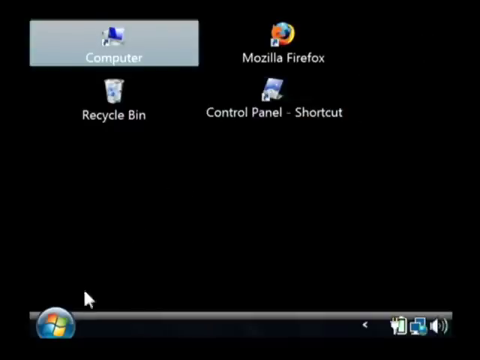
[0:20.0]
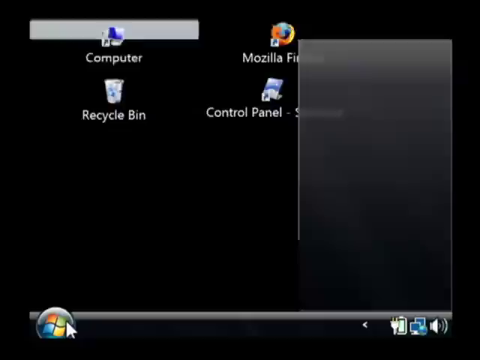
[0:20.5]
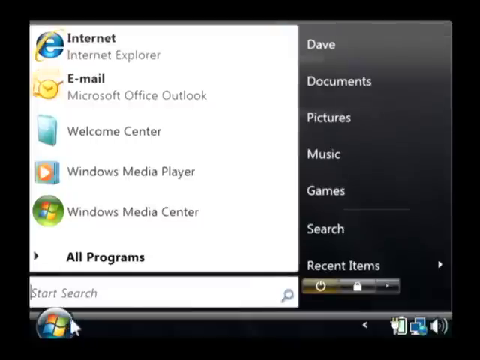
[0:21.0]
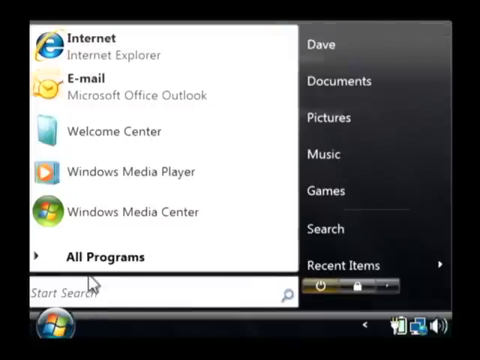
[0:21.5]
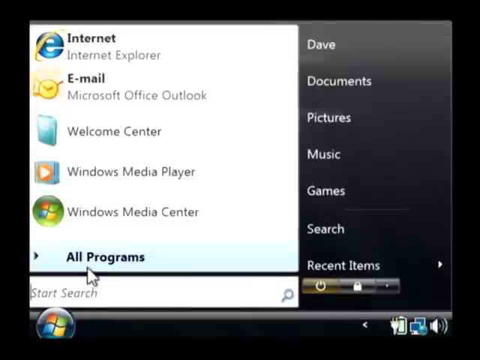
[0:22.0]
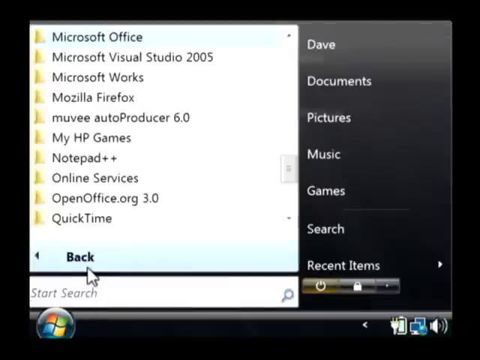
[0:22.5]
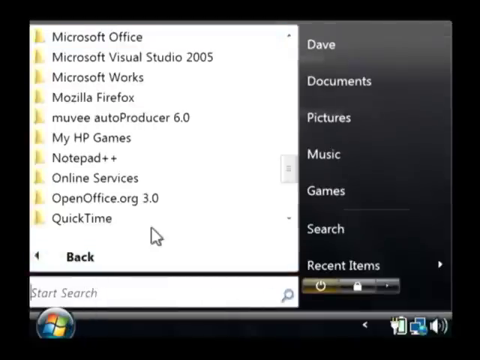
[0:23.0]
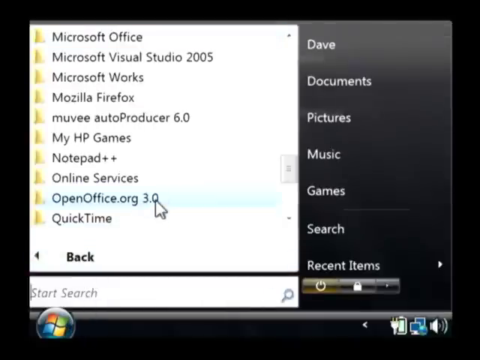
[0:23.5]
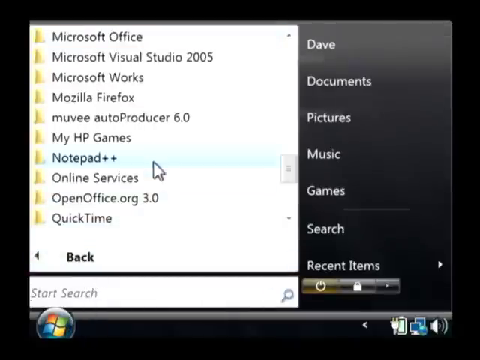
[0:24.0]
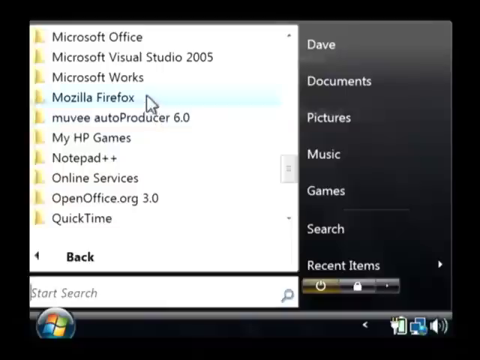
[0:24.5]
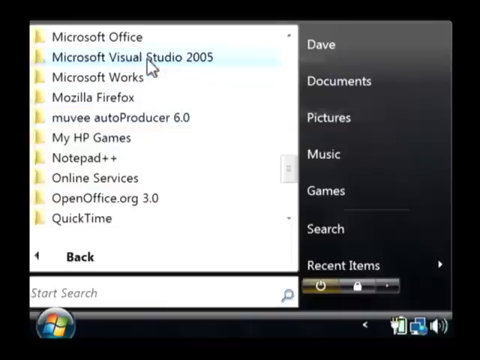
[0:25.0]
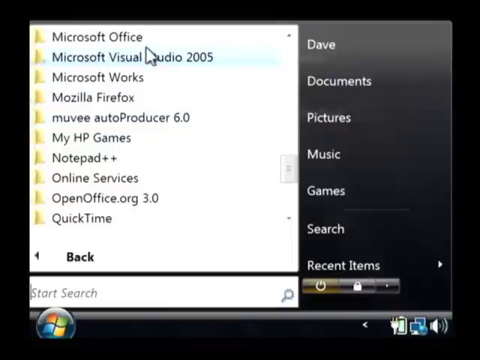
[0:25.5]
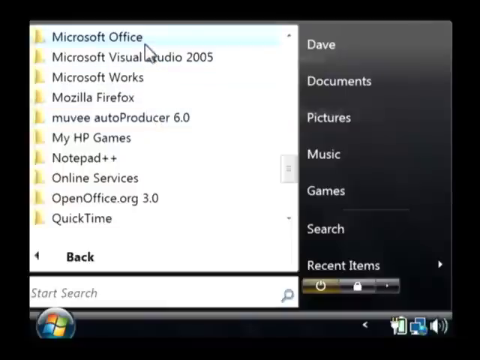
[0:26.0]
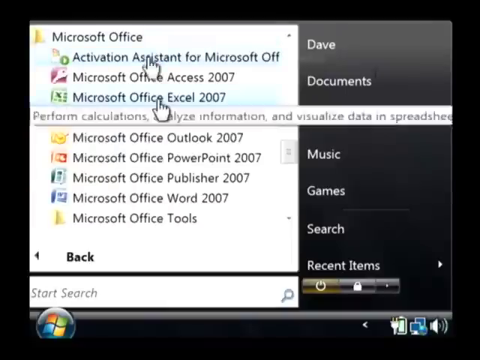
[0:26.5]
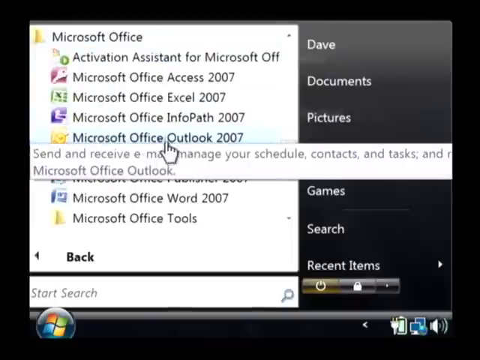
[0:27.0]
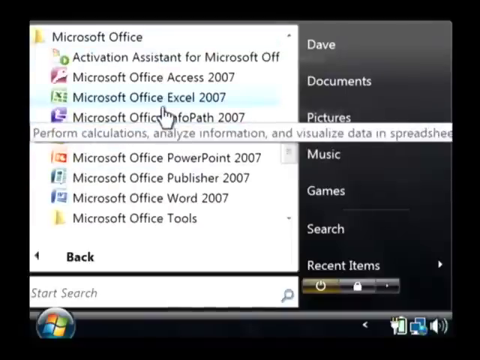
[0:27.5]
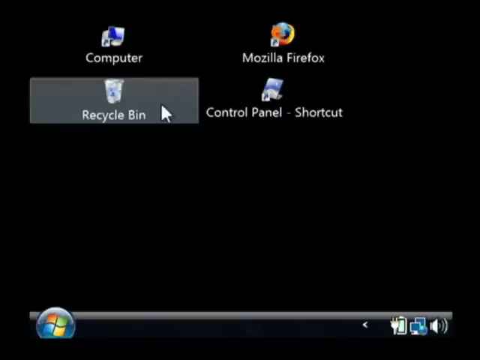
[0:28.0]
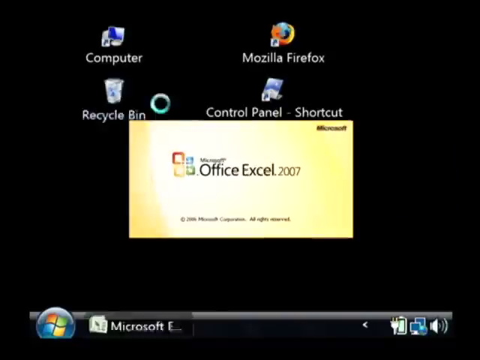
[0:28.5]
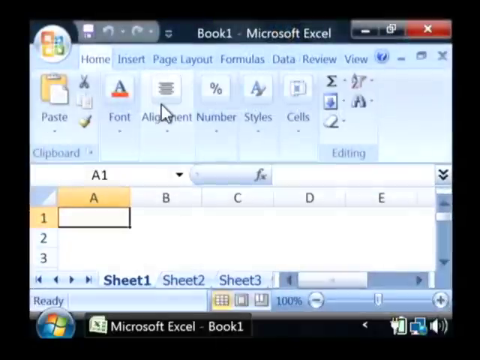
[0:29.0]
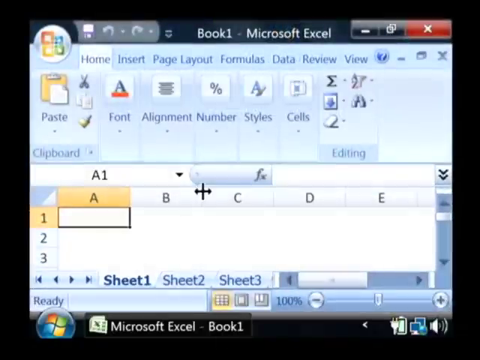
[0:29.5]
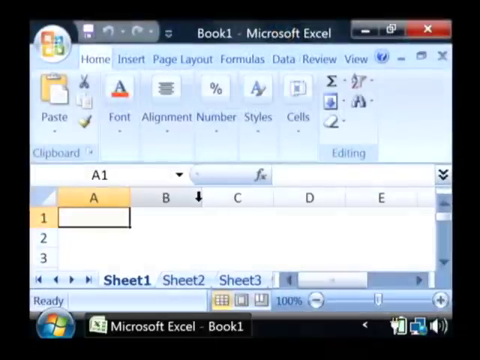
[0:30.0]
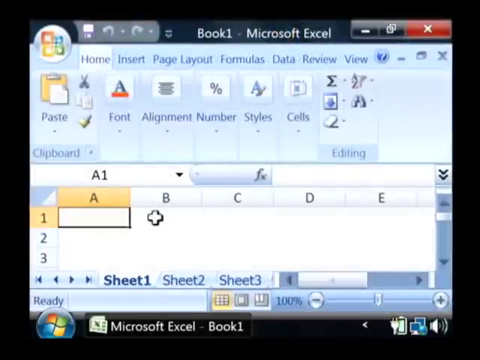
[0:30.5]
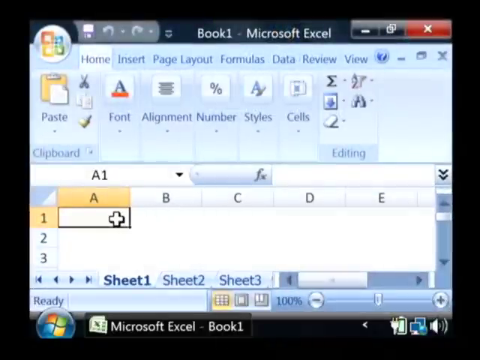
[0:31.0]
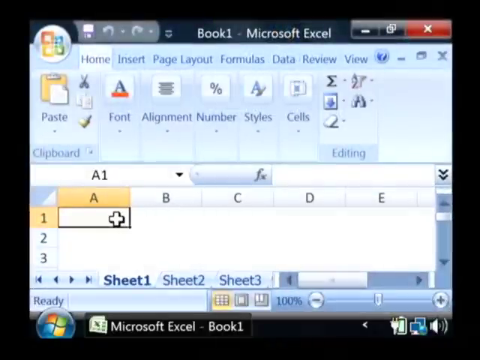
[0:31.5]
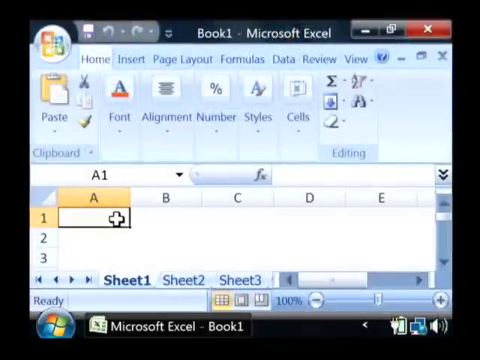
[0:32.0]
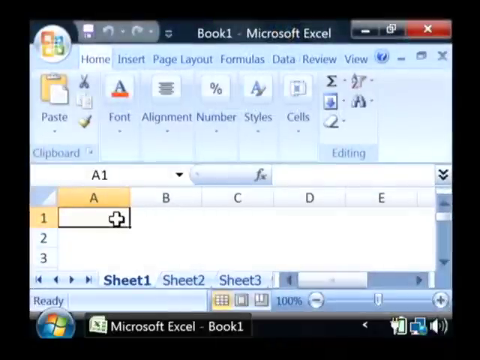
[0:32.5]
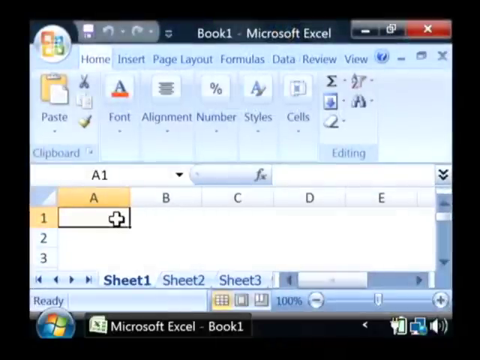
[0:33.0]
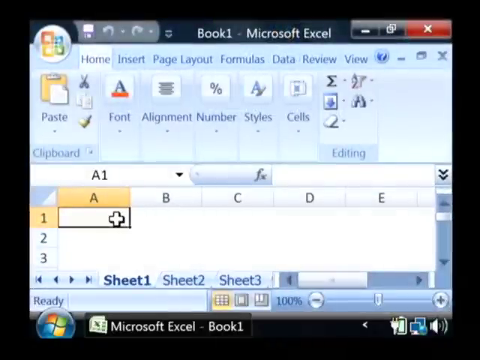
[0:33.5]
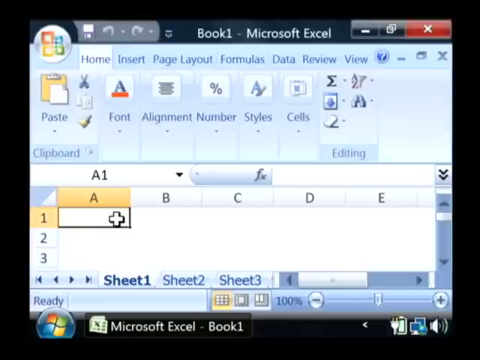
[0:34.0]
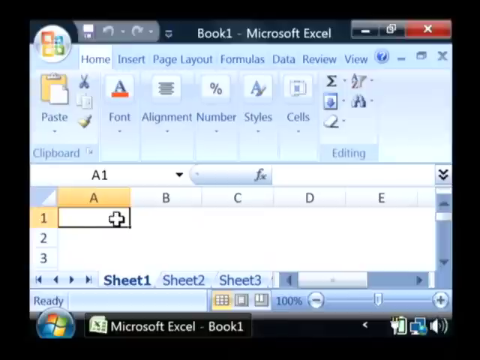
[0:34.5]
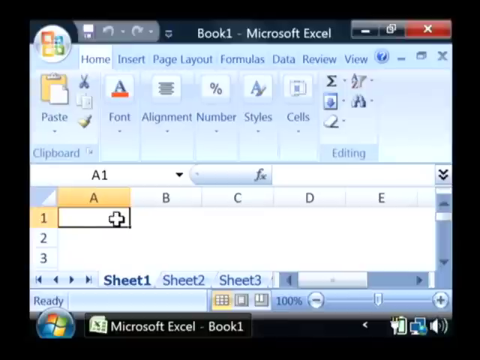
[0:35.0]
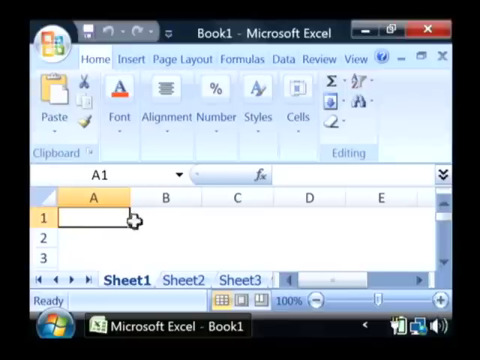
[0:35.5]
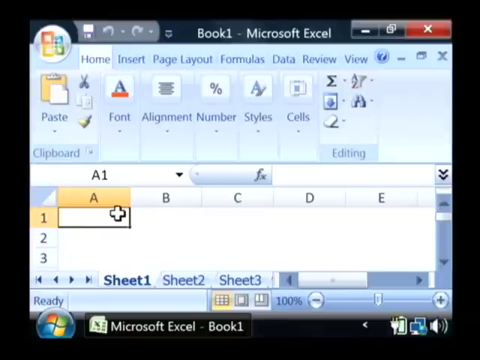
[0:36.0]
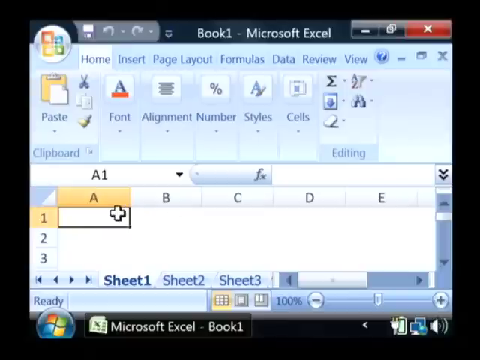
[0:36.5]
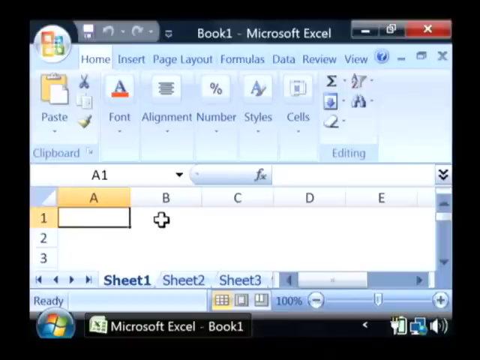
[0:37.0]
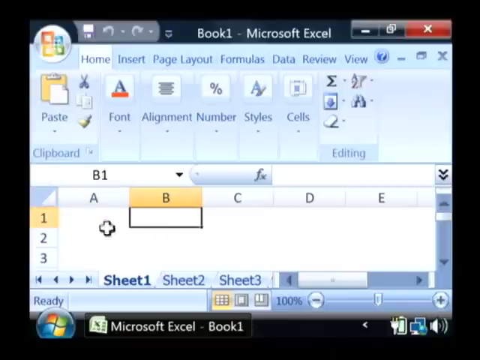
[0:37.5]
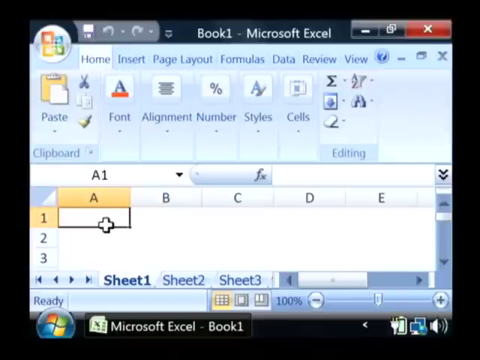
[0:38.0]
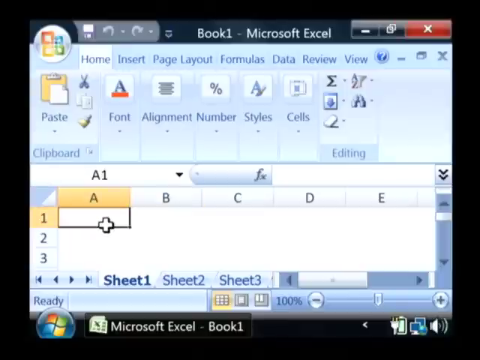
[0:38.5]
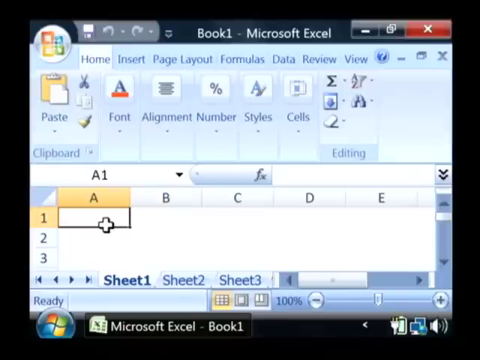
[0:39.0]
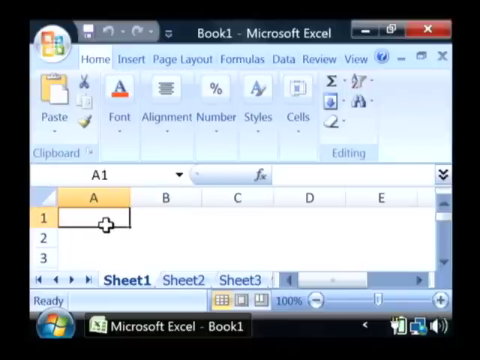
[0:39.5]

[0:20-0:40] A screen share shows an older version of Microsoft Windows, with a black background and a black toolbar at the bottom. On the left side of the toolbar is a Windows logo: a blue circle with a red, green, blue and yellow Windows logo on it. On the right side of the toolbar are a battery icon, a network icon and a sound icon. In the top left of the screen is a computer icon labeled "computer" in white text, with a gray rectangle behind it indicating it is selected. Directly below it is a recycling bin icon labeled in white text. To the right of the computer icon is a Mozilla Foxfire icon labeled in white text, and directly below that is a control panel shortcut icon with a text label. A white pointer clicks on the Windows logo to bring up a menu. Its left side is white and lists, in black text, "Internet Explorer" with the blue E icon with a yellow circle to its left; below that an email icon labeled "email"; then a blue square icon with "Welcome Center"; a Windows Media Player icon with a black text label; a green circled Windows icon with "Windows Media Center"; a right-pointing arrow with bold black text reading "All Programs"; and directly below that a search bar reading "Start Search". The right side of the menu has an ombre background, gray at the top to black at the bottom, with white text reading "Dave", "Documents", "Pictures", "Music", "Games", "Search" and "Recent Items" from top to bottom, and below them a power icon, a lock icon and a period icon in white. The mouse clicks on "All Programs", and another menu with a white background appears on the left side of the screen. Each item has a yellow file folder icon beside it and, in order, they read in black text: "Microsoft Office", "Microsoft Visual Studio 2005", "Microsoft Works", "Mozilla Foxfire", "Movie Auto Producer 6.0", "MyHP Games", "Notepad++", "Online Services", "OpenOffice.org 3.0", "QuickTime". Below them is "back" in bold black text with a left-facing arrow, and the search field is still below that. The mouse hovers over items and clicks on Microsoft Office, which brings up a submenu beneath it listing in black text: "Activation Assistant for Microsoft Office", "Microsoft Office Access 2007", "Microsoft Office Excel 2007", "Microsoft Office InfoFast 2007", "Microsoft Office Outlook 2007", "Microsoft Office PowerPoint 2007", "Microsoft Office Publisher 2007", "Microsoft Office Word 2007", and finally "Microsoft Office Tools", which has a submenu. The person clicks on Office Excel. The screen returns to the black background, and the program loads in the center: a yellow square with black writing that says "Microsoft Office 2007", with Microsoft in the top right and a copyright across the bottom. The program loads to fill the screen; it is Microsoft Excel, quite zoomed in, with the typical Excel blue screen. The mouse hovers over cell A1 and seemingly clicks on it, then clicks on B1, clicks back to A1 and begins to type the letters "my data".